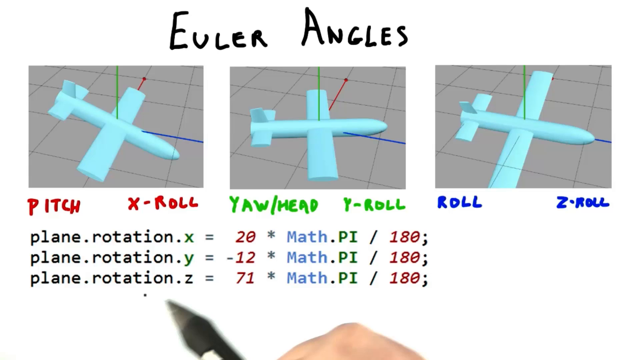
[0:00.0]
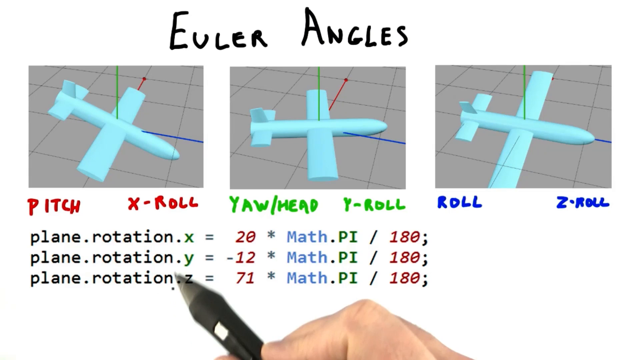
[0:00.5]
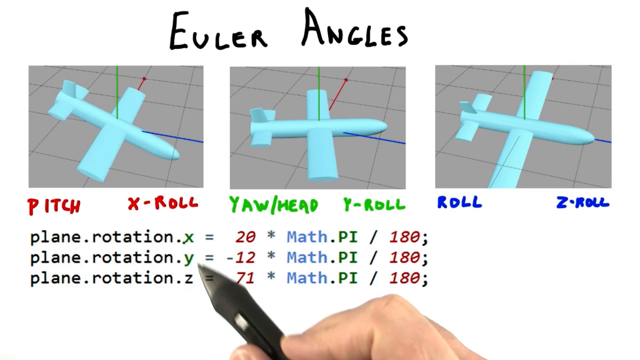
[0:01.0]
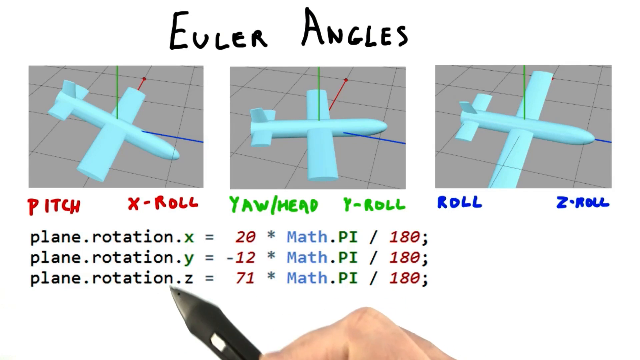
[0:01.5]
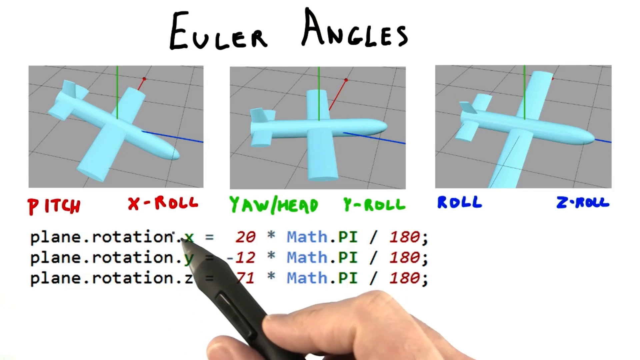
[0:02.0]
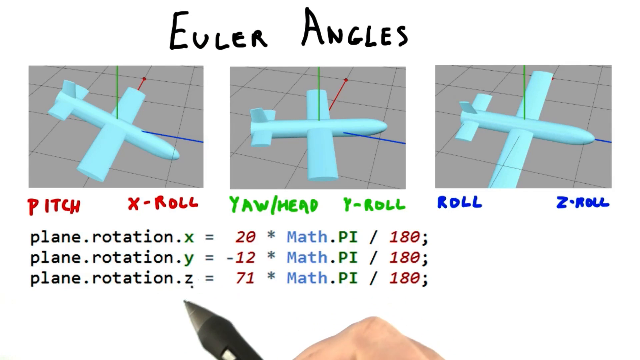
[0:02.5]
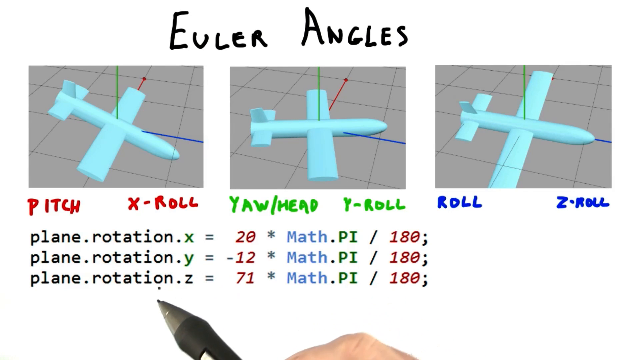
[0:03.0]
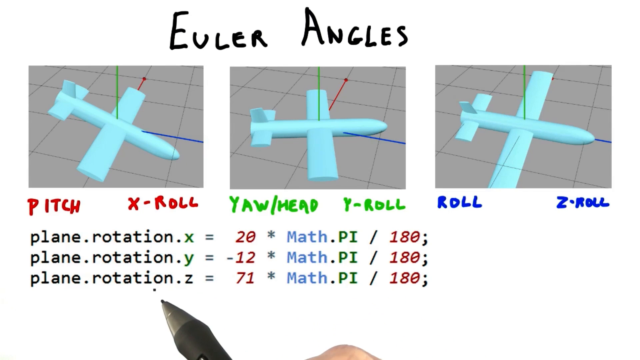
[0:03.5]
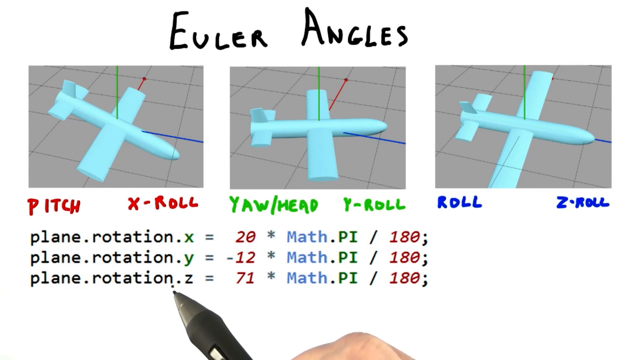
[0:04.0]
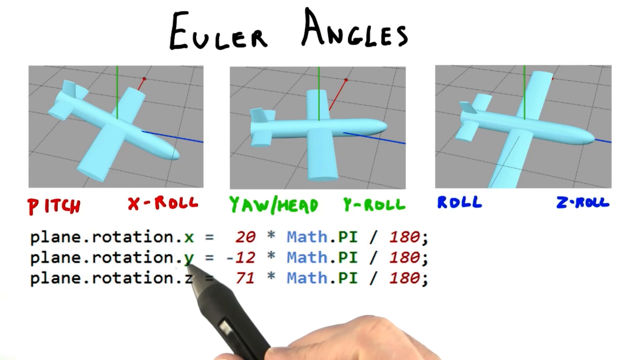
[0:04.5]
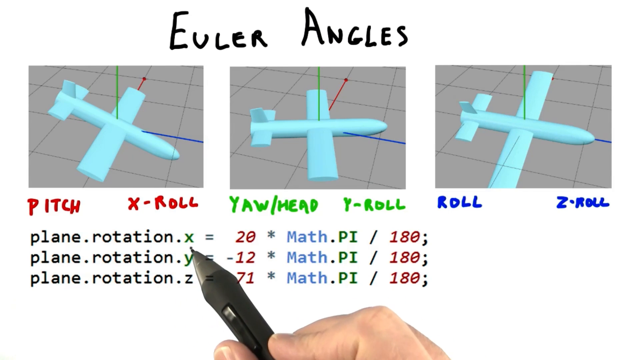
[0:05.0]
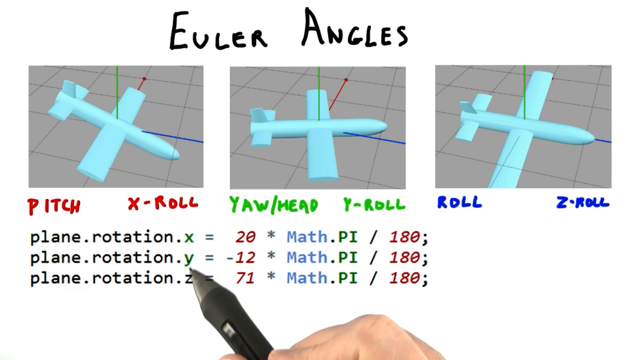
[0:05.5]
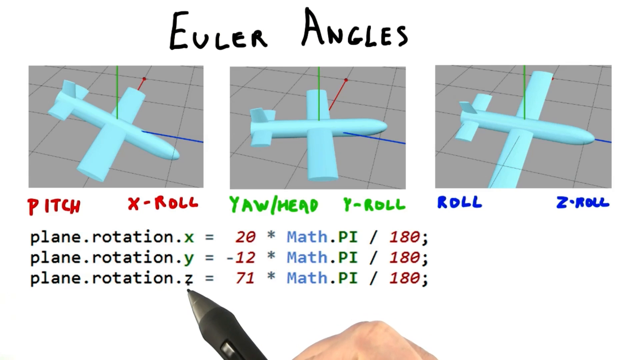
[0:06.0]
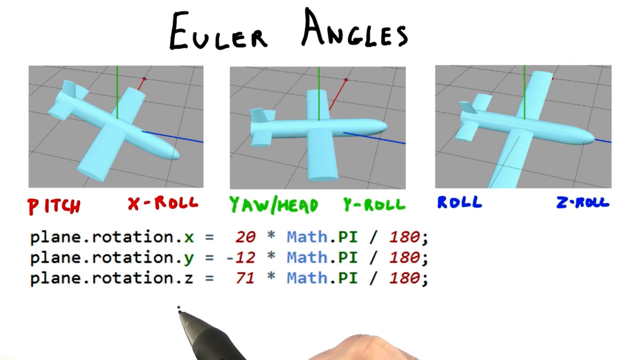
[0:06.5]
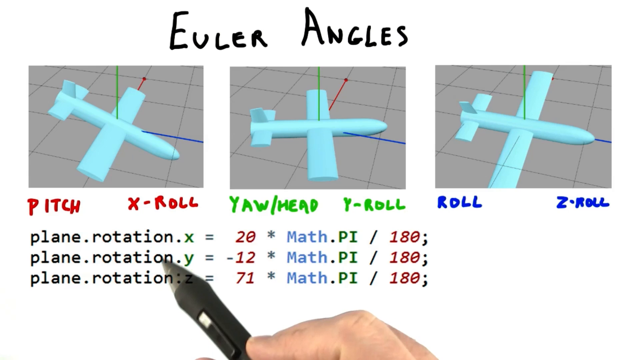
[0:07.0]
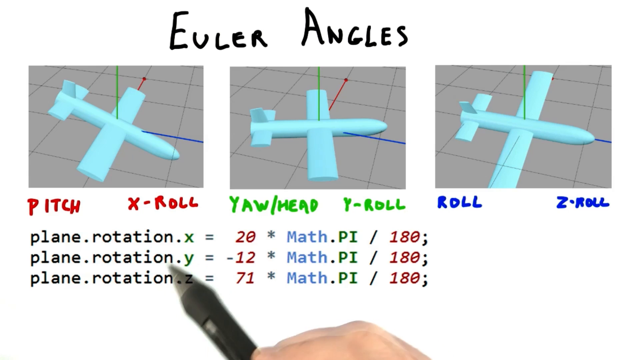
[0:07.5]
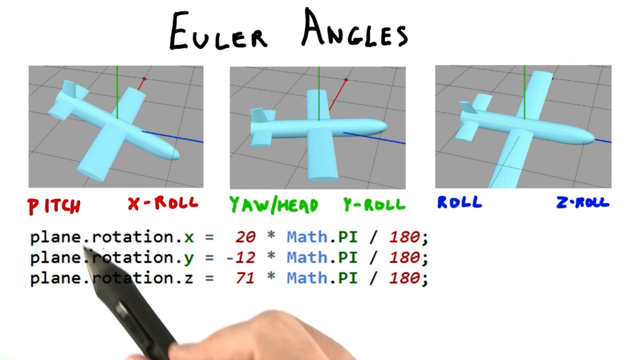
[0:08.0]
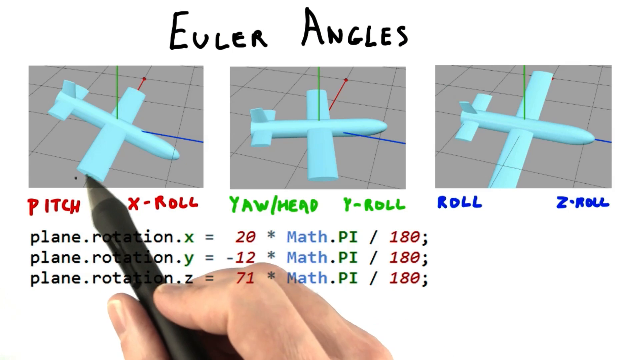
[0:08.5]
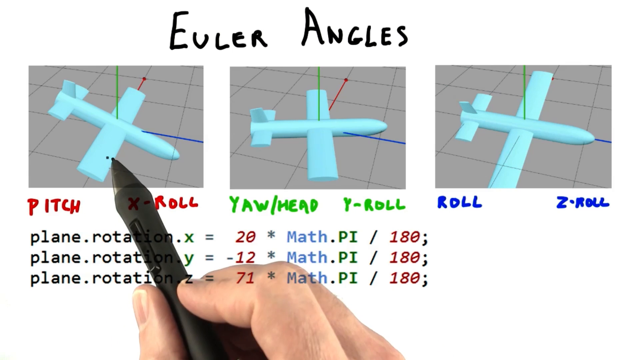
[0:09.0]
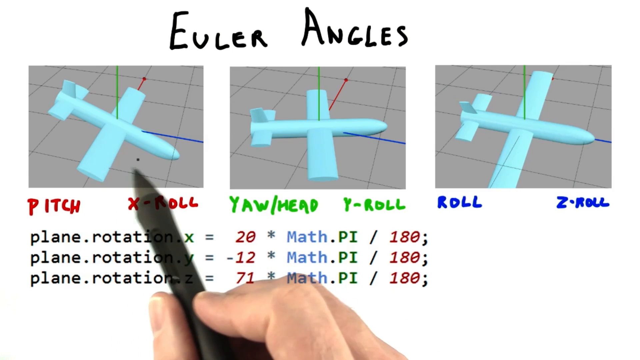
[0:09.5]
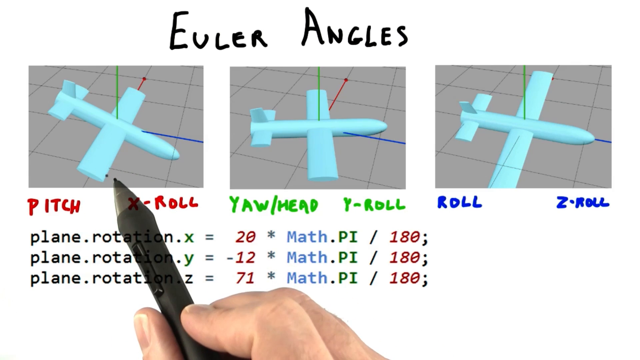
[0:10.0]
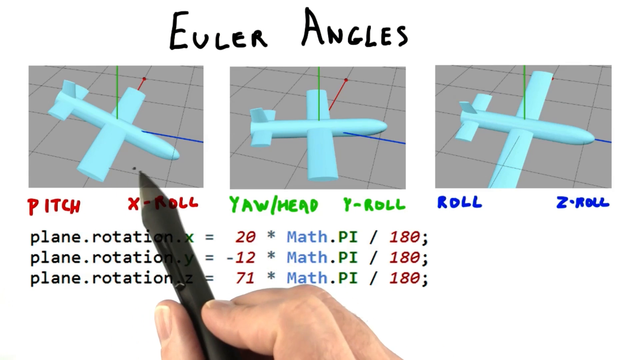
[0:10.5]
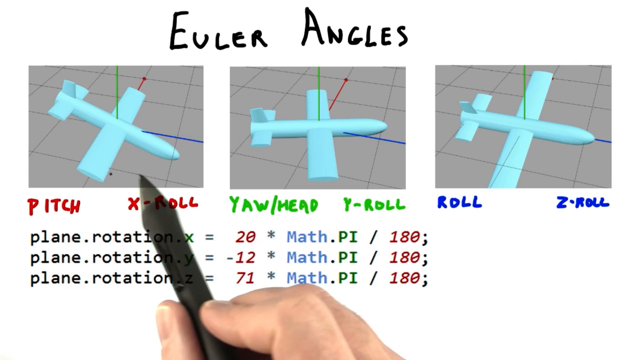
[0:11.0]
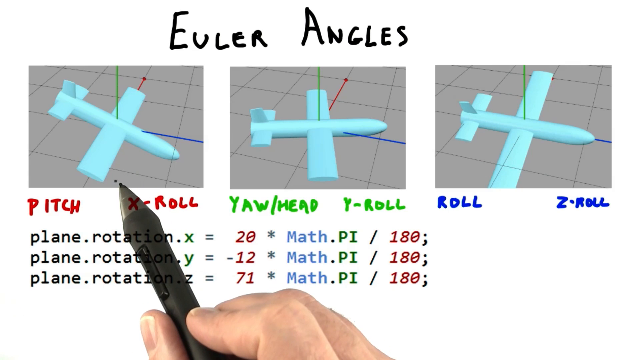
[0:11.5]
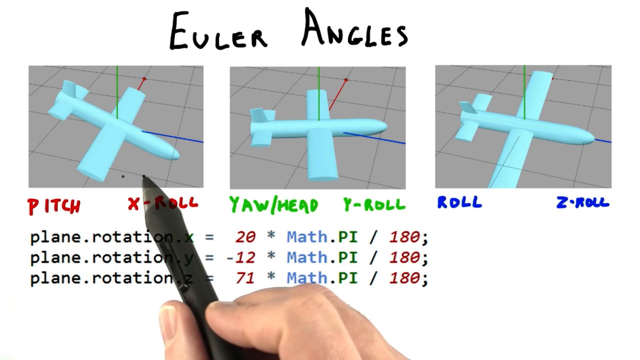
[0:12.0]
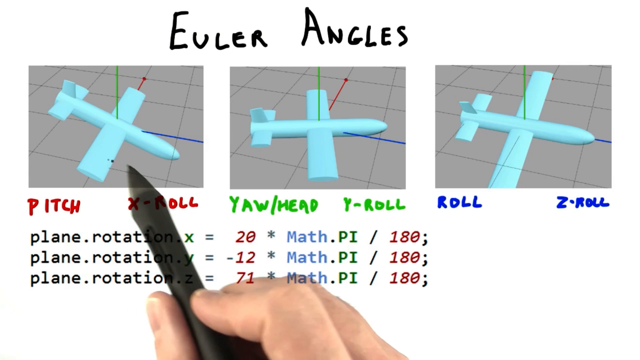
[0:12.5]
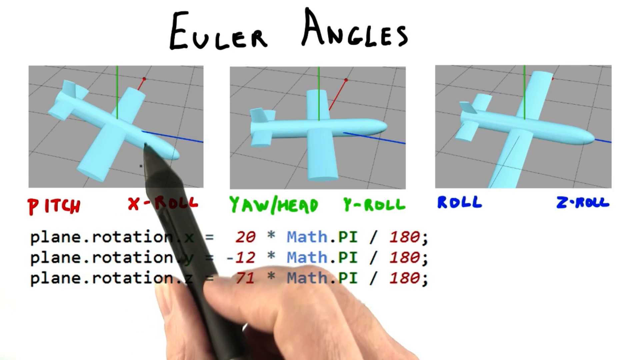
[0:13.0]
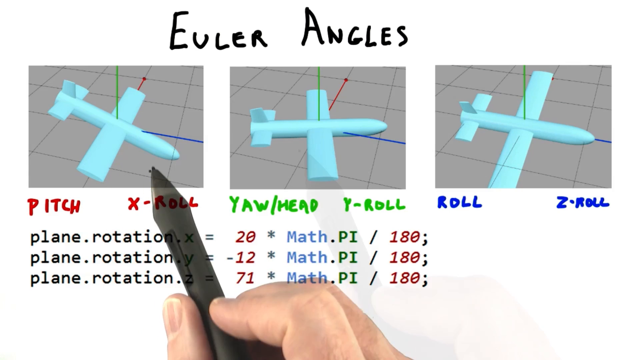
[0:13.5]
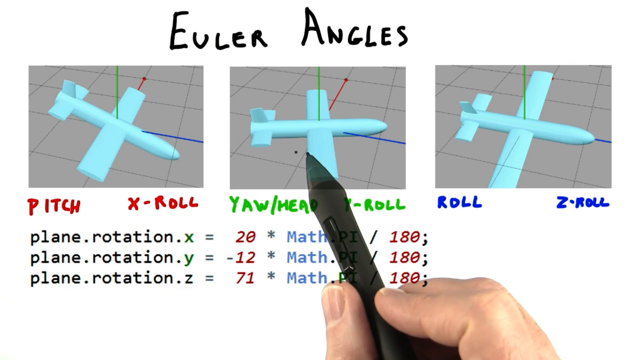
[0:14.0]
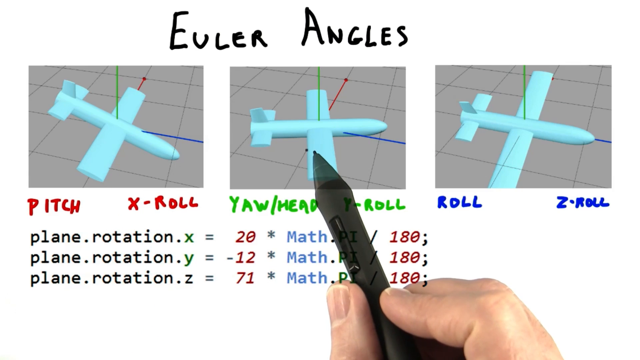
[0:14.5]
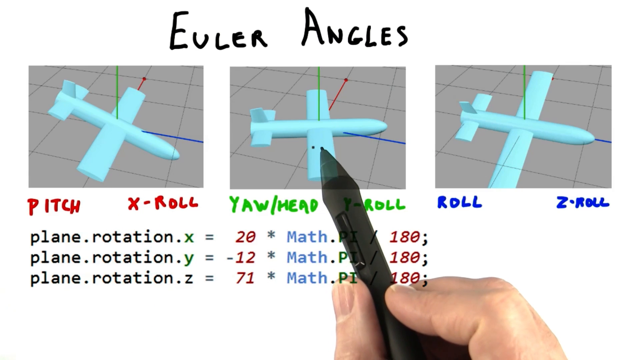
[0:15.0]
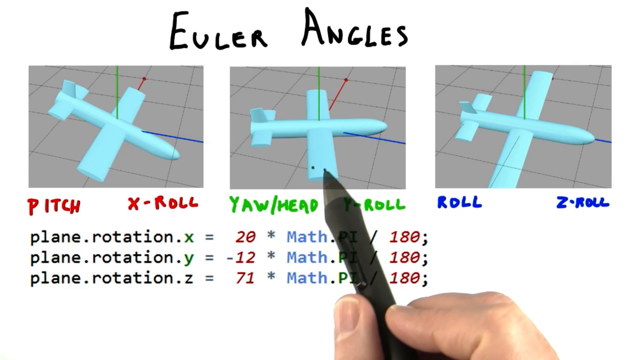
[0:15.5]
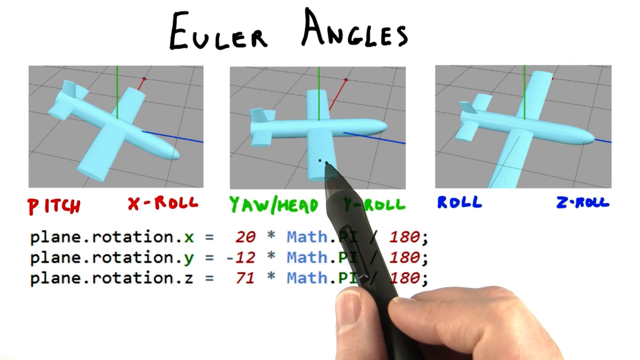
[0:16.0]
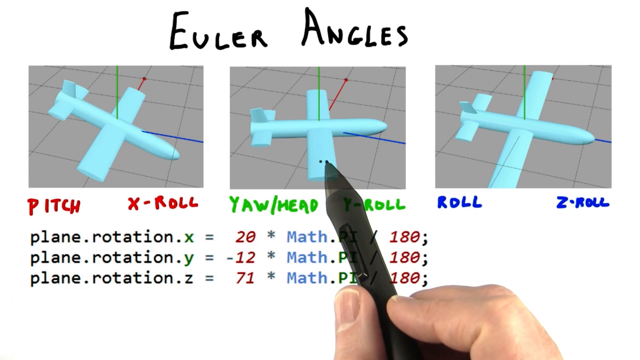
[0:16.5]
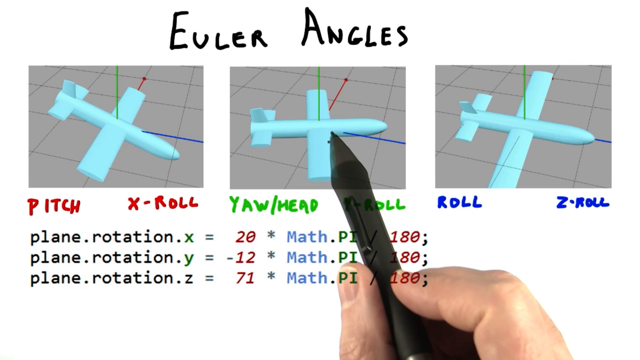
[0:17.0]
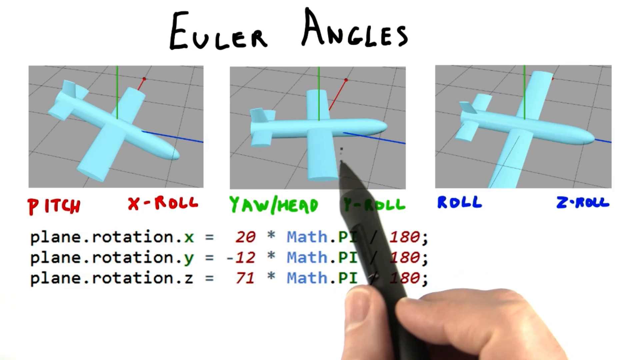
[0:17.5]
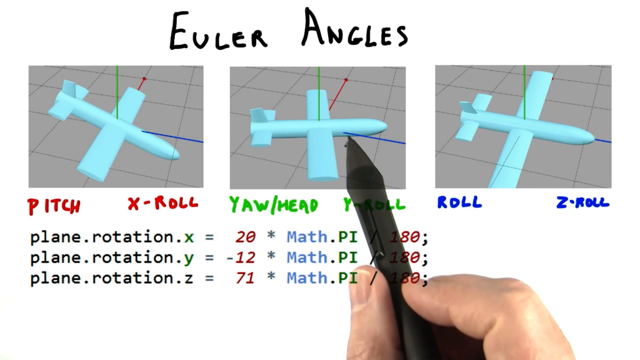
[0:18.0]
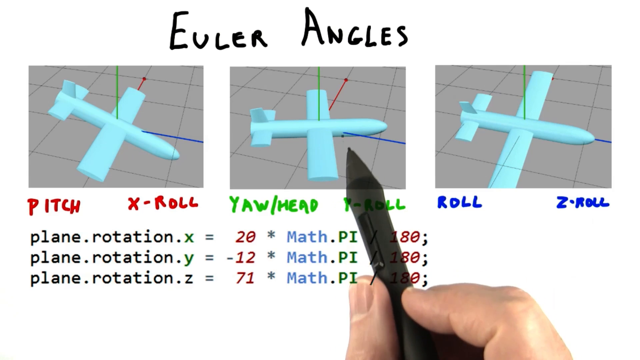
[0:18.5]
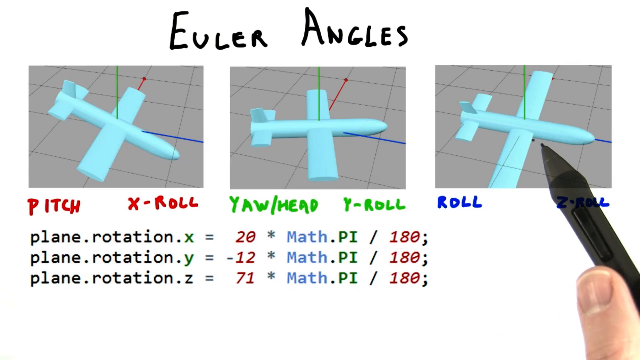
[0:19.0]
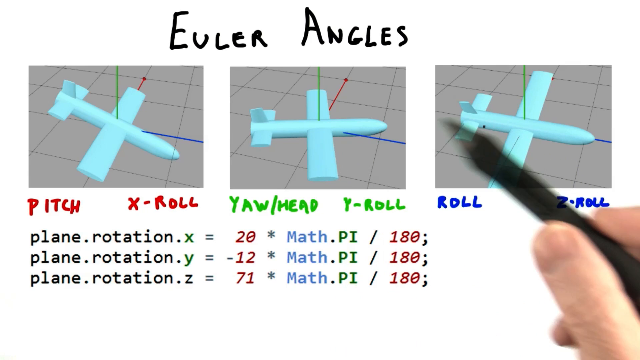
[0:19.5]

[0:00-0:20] A white screen shows "Euler angles" written in black at the top. Below it are three squares side by side. The first square has a gray background made up of gray squares, and over them is a solid baby blue shape of an airplane that looks like a diagram of an airplane. A green line goes from the top of the airplane up out of the box, and a blue line goes from the front of the airplane out the right side of the box. Underneath this square, written in red, is "pitch", and to its right is "X-roll". To the right is a second square, also with a background of small gray squares and a baby blue airplane inside. Underneath it, in green, is "yaw/head", and to its right is "Y-roll". To the right of that is the third square, again with a background of gray squares and a baby blue airplane shape in the middle, with a green line going from its top up out the top. Along the bottom of that box is the word "roll", and to its right "Z roll". Underneath all of them is the text "plane rotation X equals 20, plane rotation Y equals 12, plane rotation Z equals 71". A person's hand holding a pen points to certain areas in the boxes.